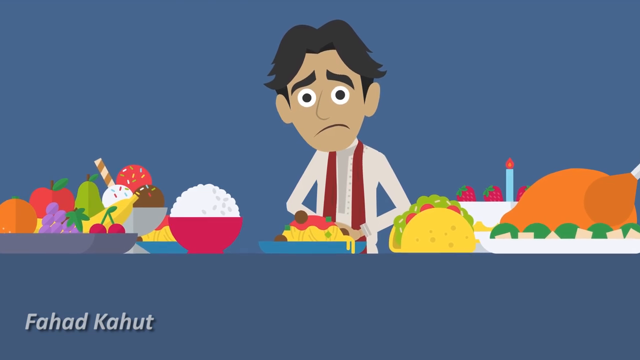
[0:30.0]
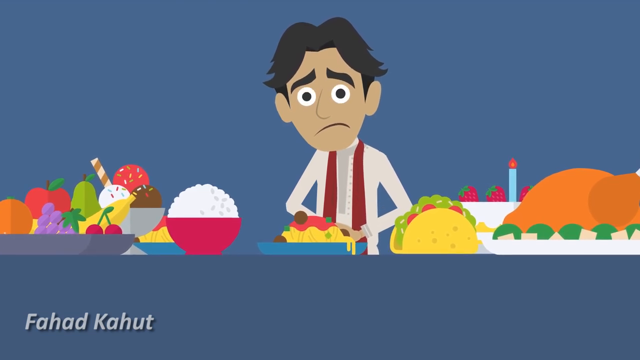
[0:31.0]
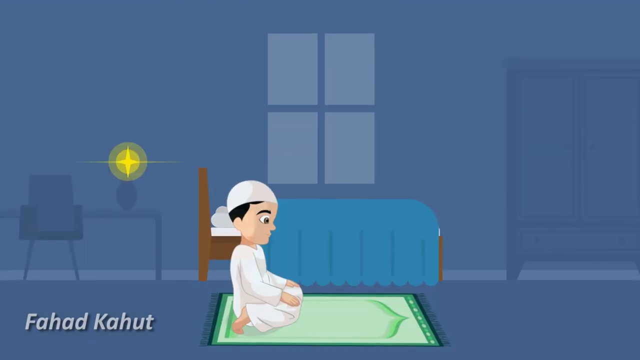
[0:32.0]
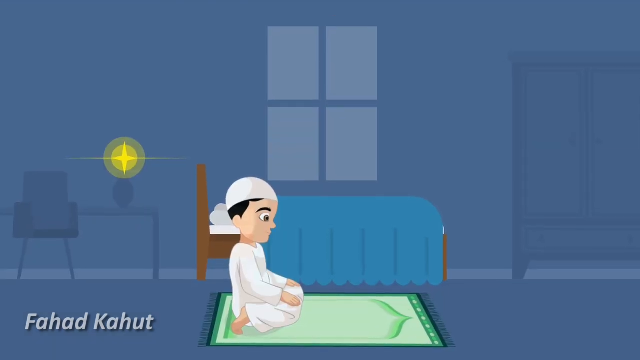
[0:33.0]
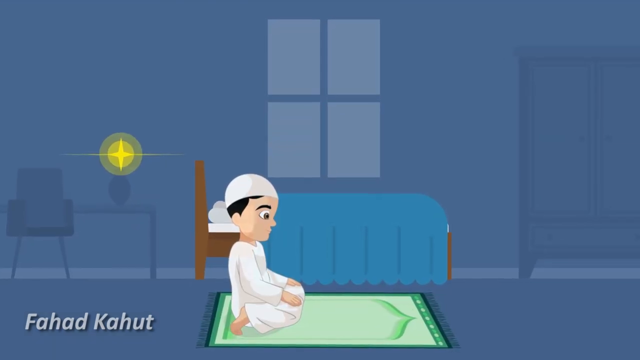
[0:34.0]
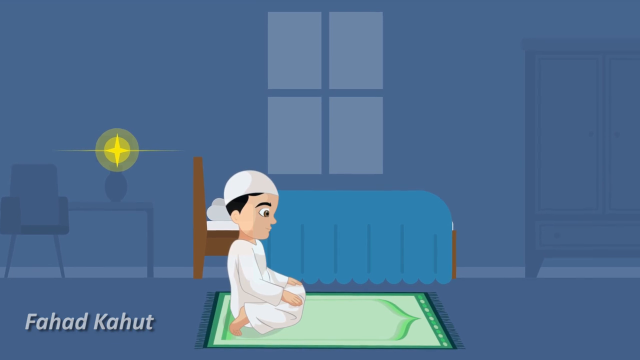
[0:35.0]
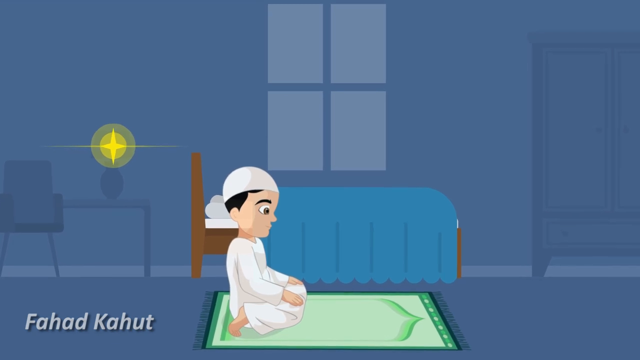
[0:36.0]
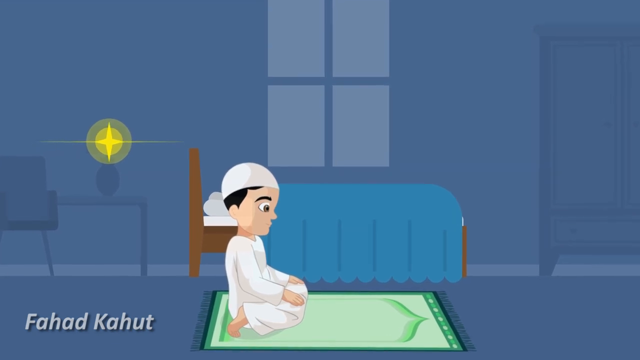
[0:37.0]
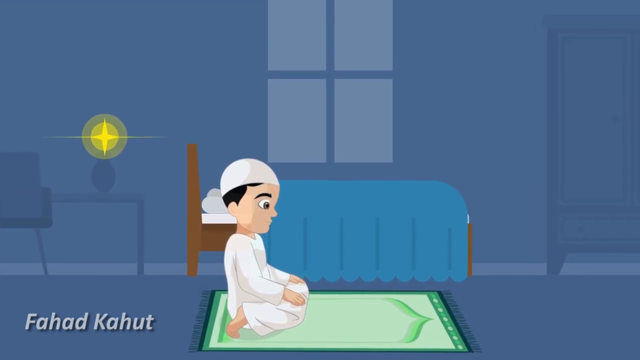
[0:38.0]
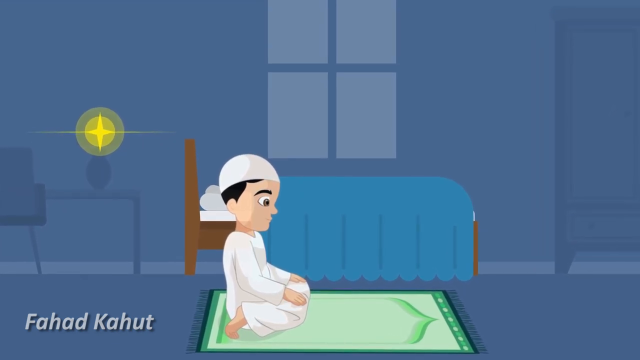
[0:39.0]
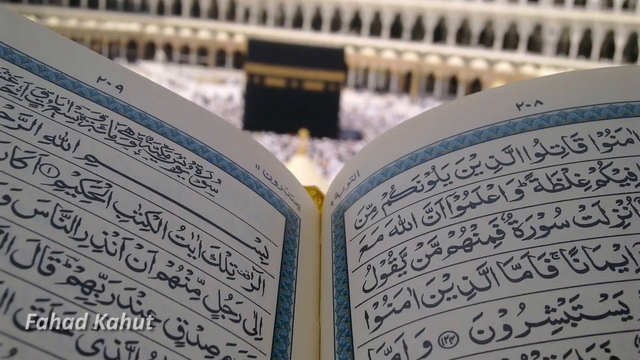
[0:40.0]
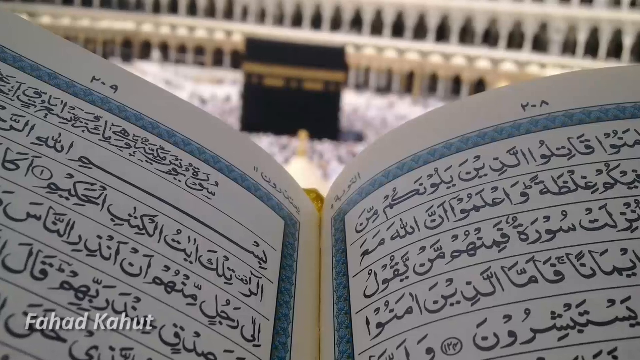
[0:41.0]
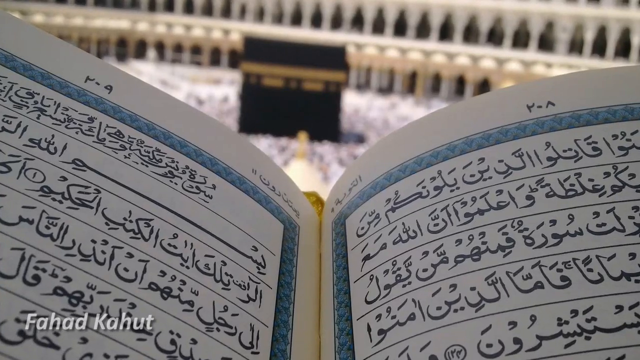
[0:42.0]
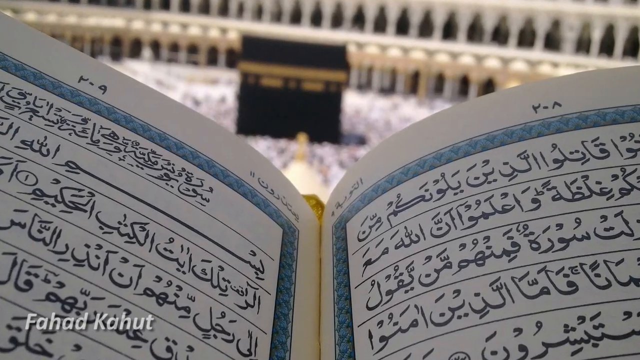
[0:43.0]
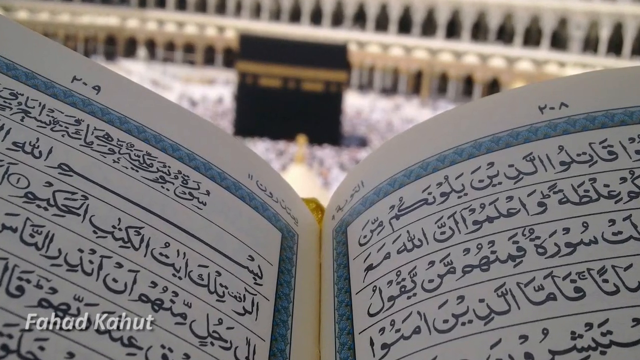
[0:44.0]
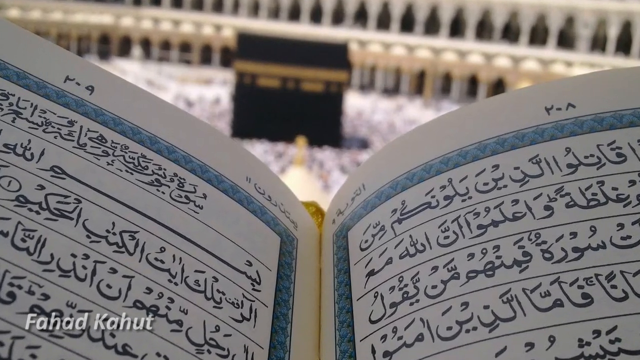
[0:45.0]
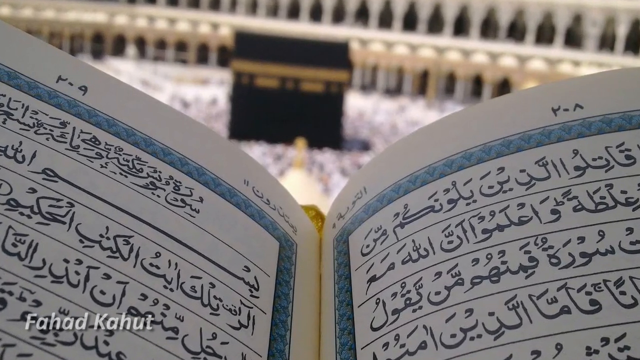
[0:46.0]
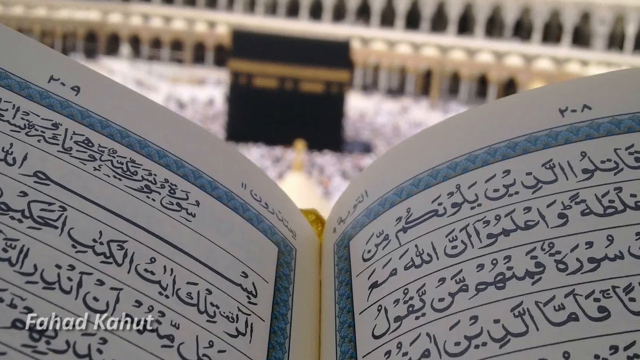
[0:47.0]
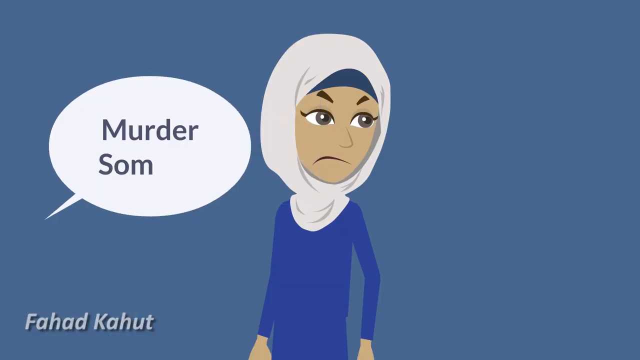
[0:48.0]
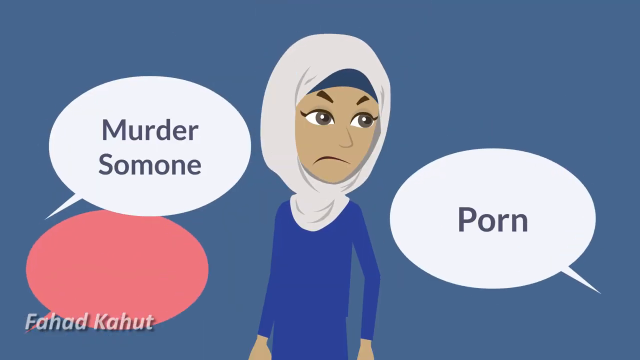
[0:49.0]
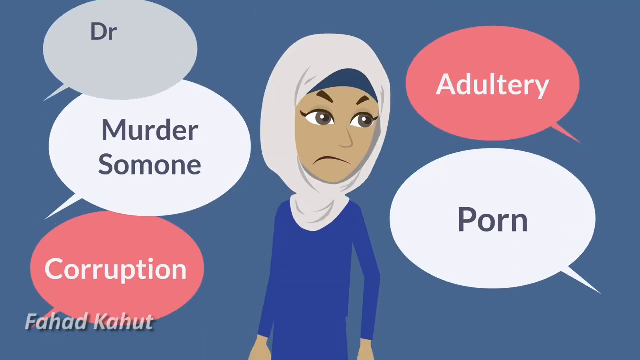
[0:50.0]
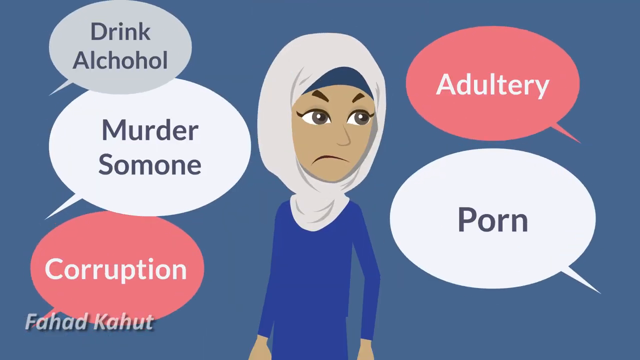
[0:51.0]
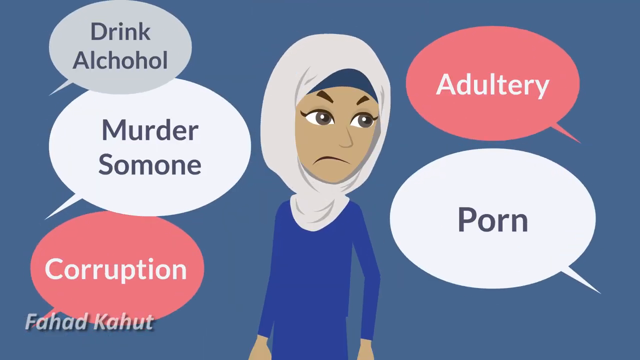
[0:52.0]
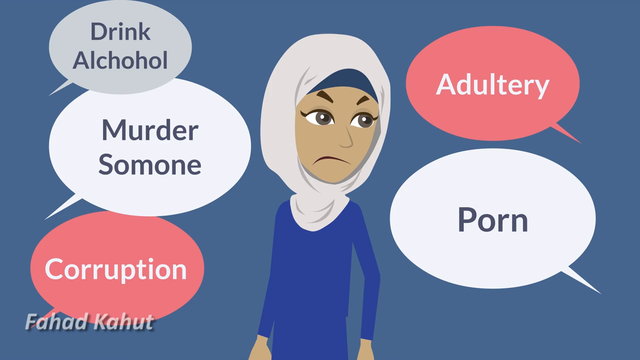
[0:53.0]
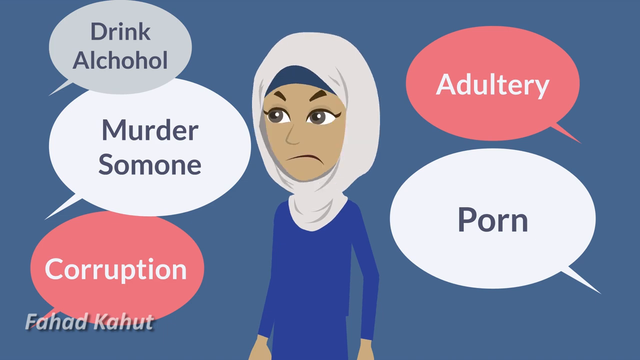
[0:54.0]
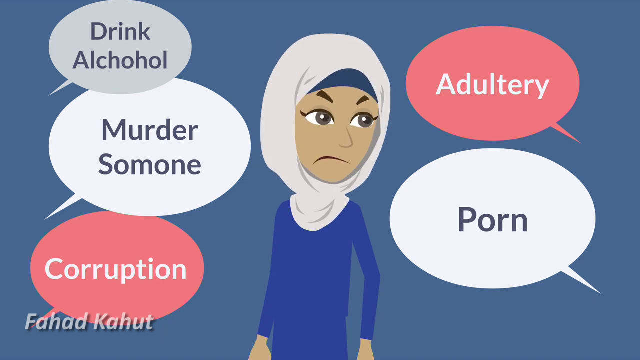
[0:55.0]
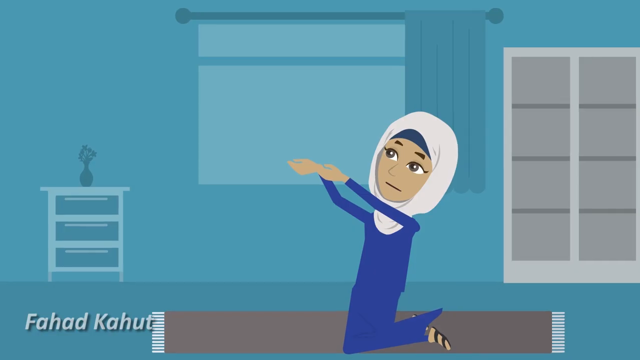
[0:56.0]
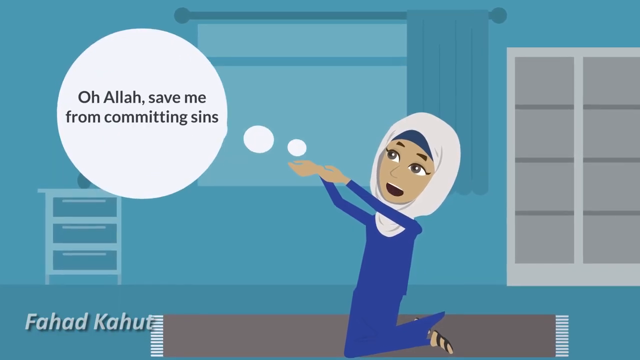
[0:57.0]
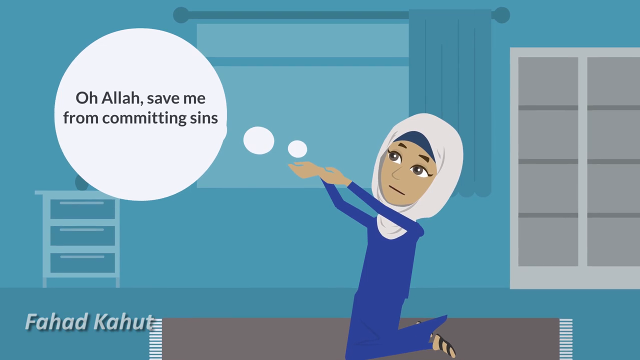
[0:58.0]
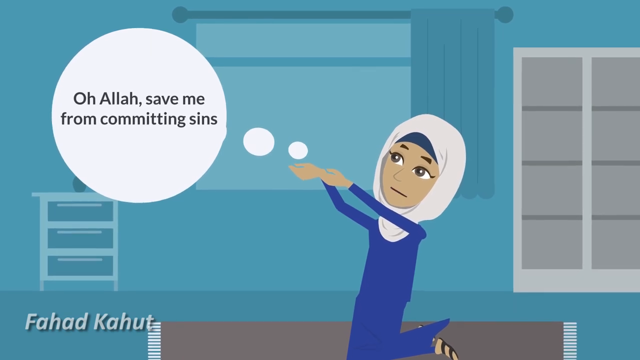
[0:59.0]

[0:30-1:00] The cartoon man continues to look smug with all the food sitting in front of him, blinking and looking unimpressed at not being allowed to eat it. The camera then pans to a man in prayer, dressed all in white with a white hat. What looks like a light appears there, shining brightly and looking yellow, and there is a bed beside him with a chair. Next, an actual Quran is shown, with the camera zooming closer to it. The next screen shows a woman wearing a hijab surrounded by text bubbles that say "murder someone", "porn", "adult", "corruption" and "drink alcohol"; corruption and adultery appear in red. The woman looks smugly from side to side at the bubbles and is not impressed. In the next scene, he is seen thinking "Oh Allah, save me from committing sins," saying it in prayer.